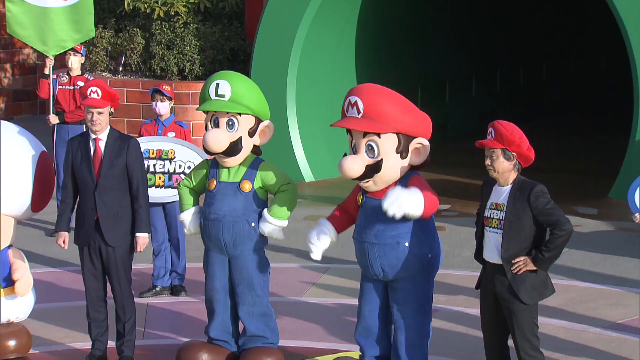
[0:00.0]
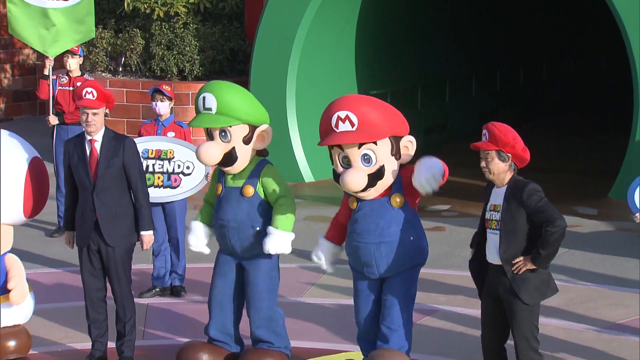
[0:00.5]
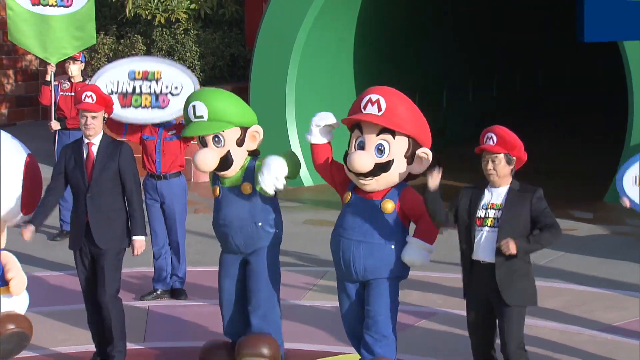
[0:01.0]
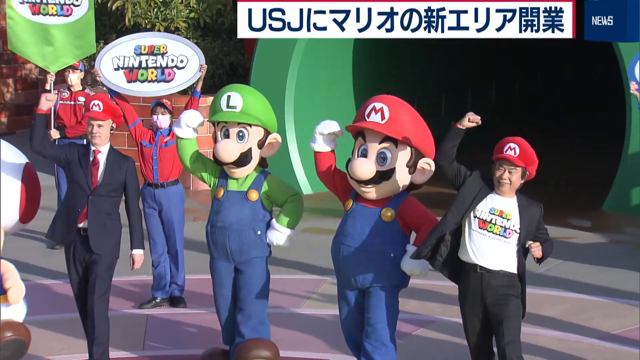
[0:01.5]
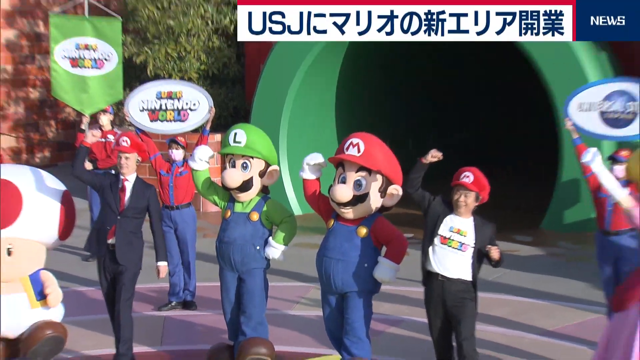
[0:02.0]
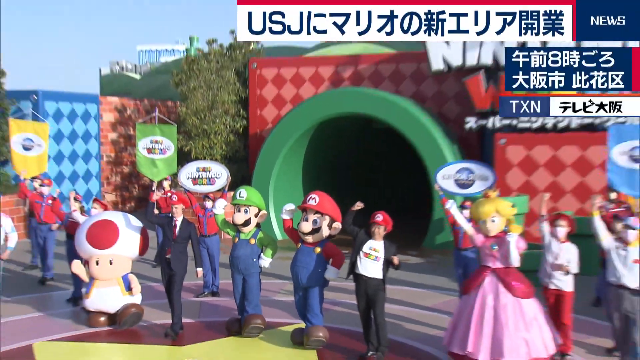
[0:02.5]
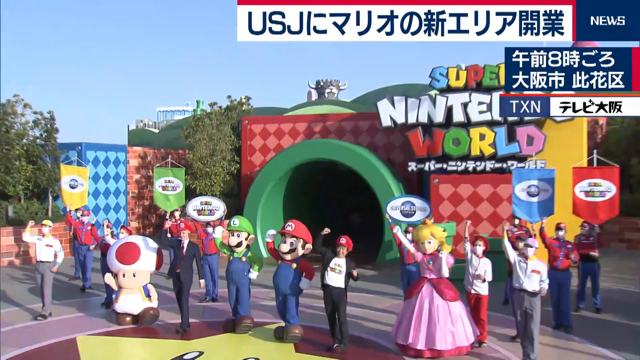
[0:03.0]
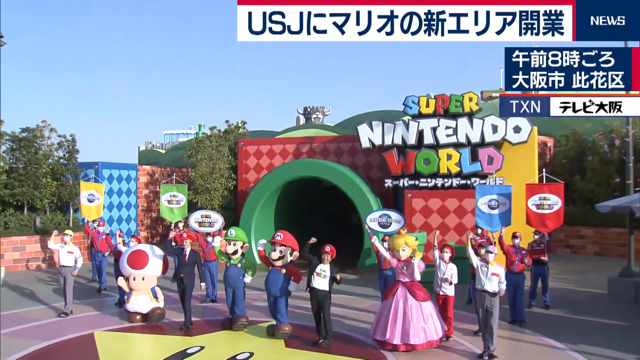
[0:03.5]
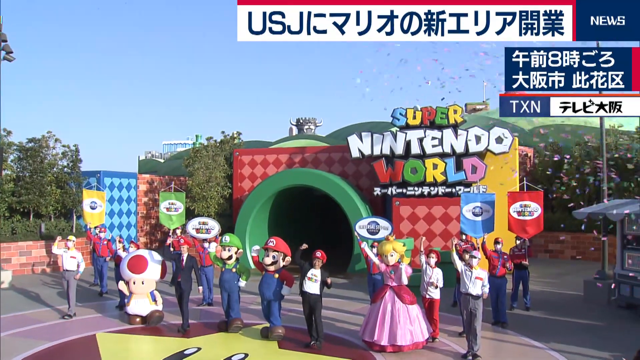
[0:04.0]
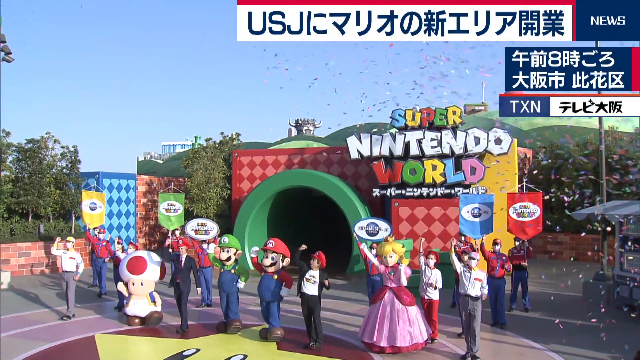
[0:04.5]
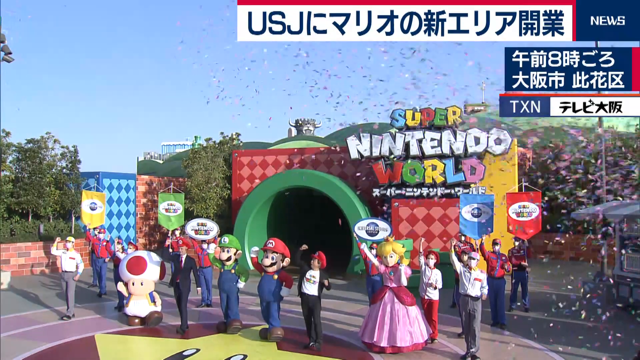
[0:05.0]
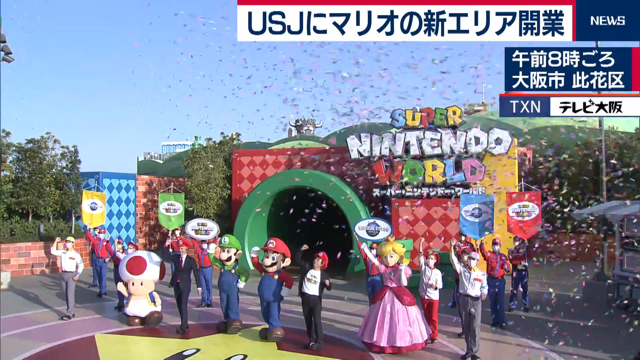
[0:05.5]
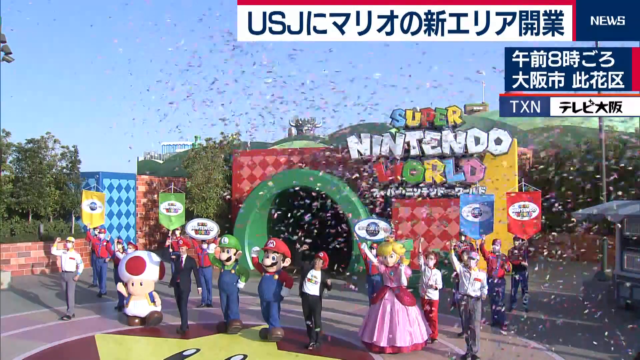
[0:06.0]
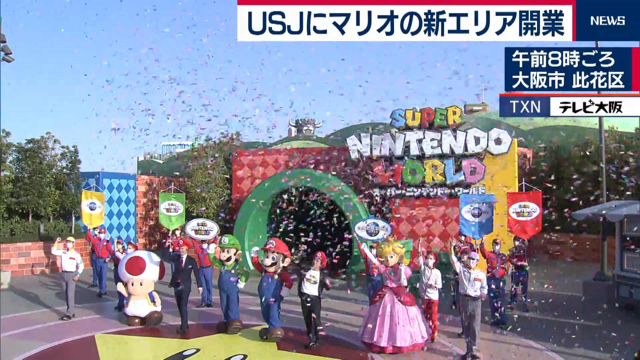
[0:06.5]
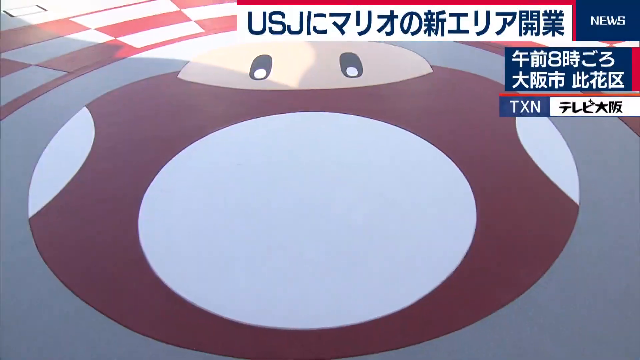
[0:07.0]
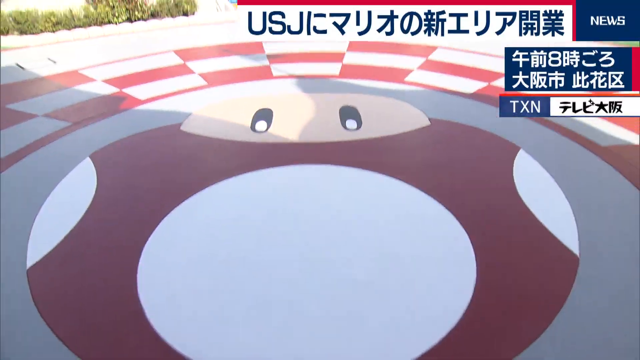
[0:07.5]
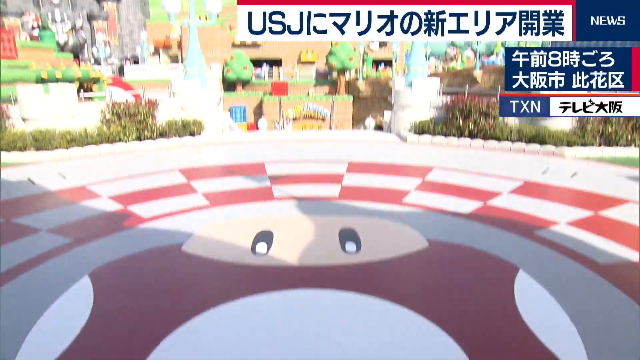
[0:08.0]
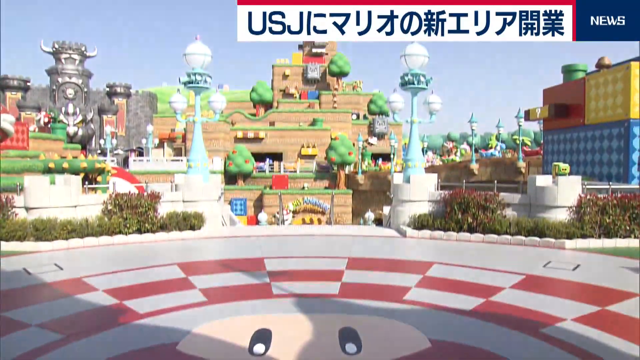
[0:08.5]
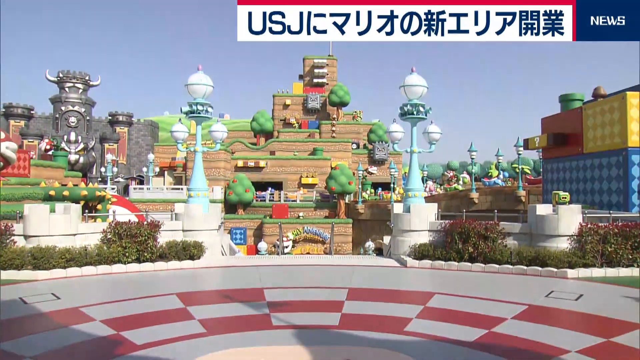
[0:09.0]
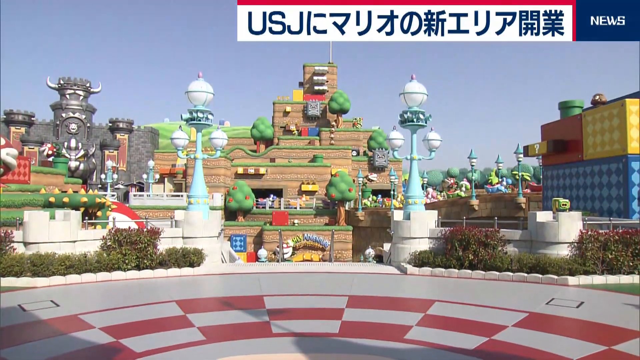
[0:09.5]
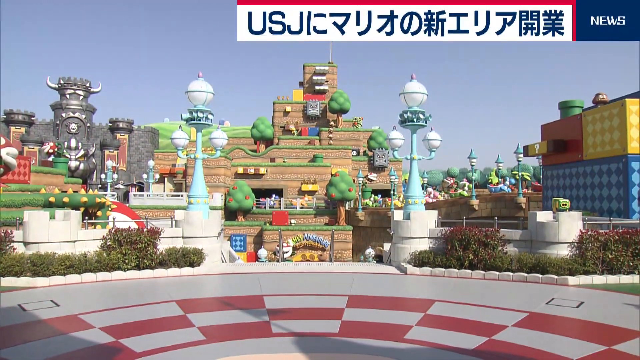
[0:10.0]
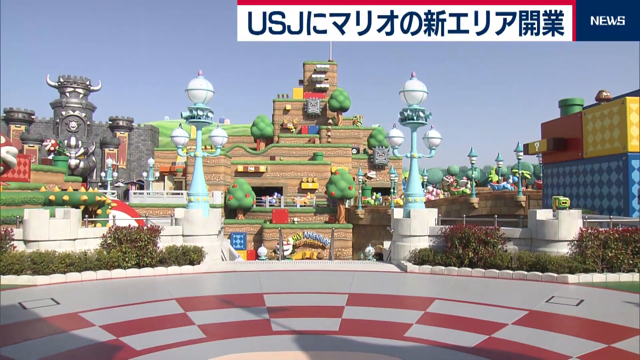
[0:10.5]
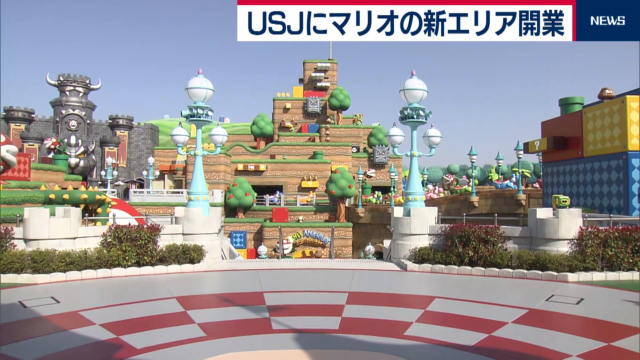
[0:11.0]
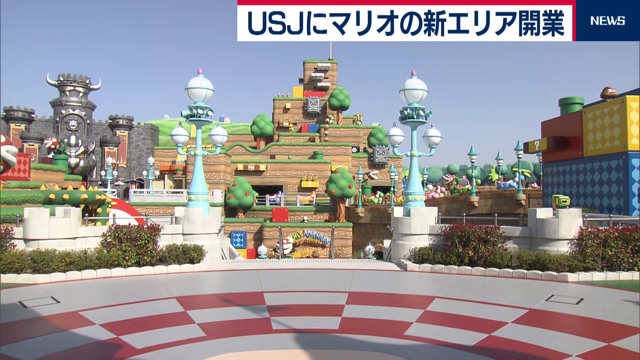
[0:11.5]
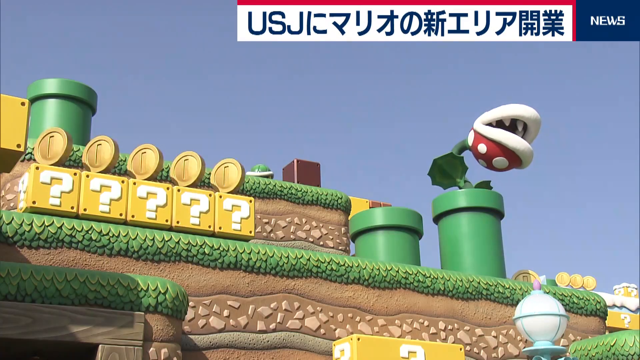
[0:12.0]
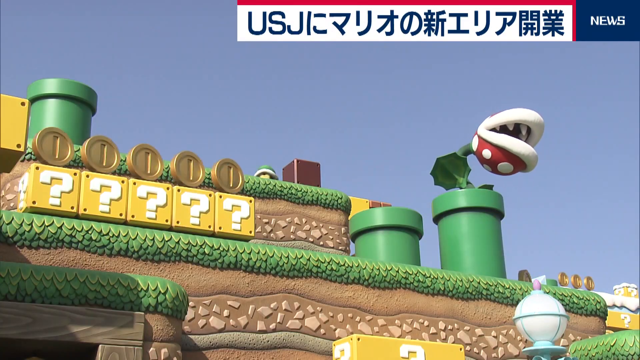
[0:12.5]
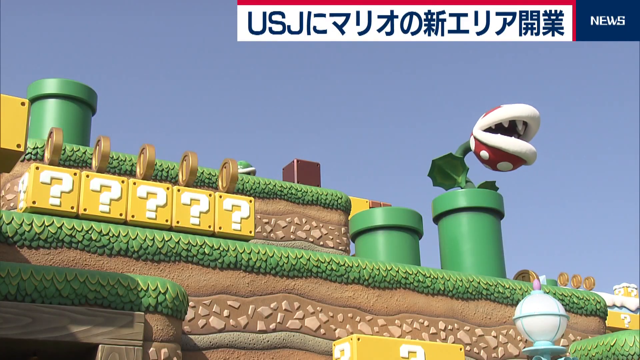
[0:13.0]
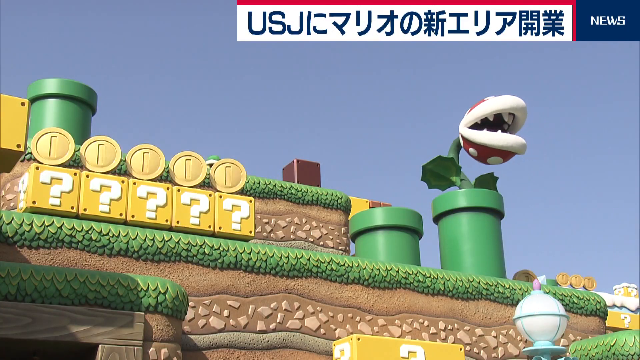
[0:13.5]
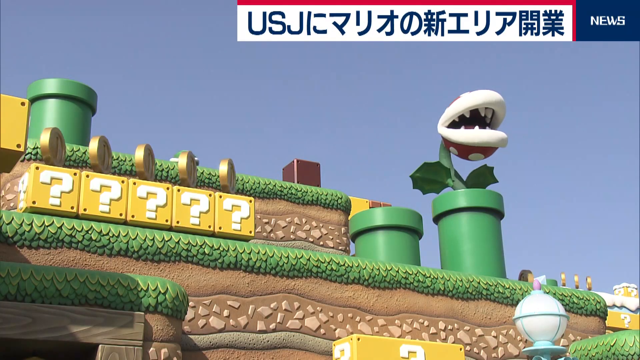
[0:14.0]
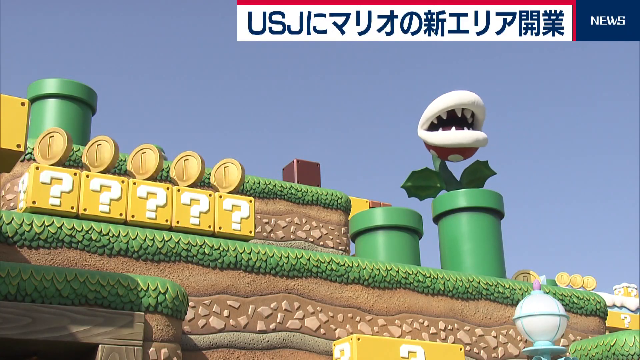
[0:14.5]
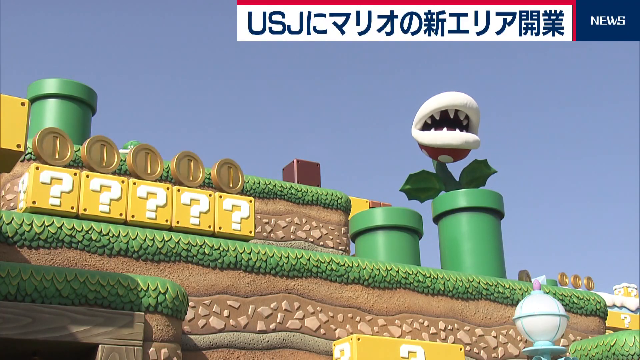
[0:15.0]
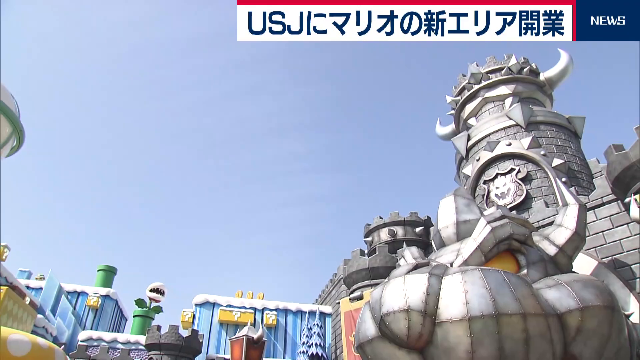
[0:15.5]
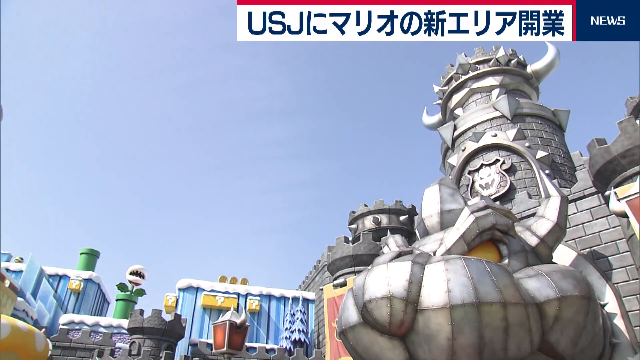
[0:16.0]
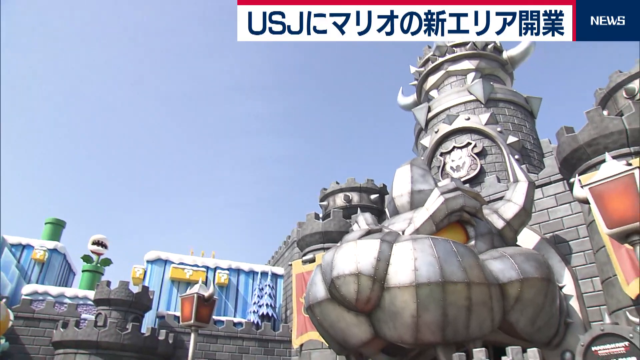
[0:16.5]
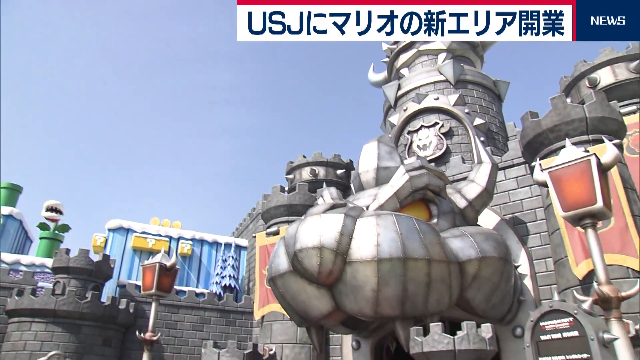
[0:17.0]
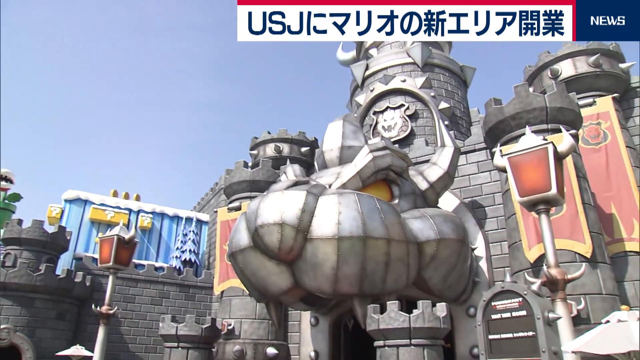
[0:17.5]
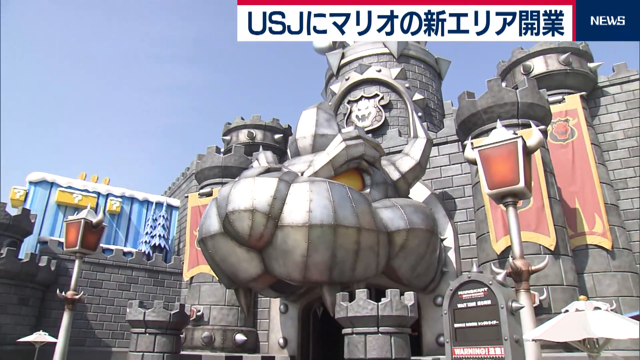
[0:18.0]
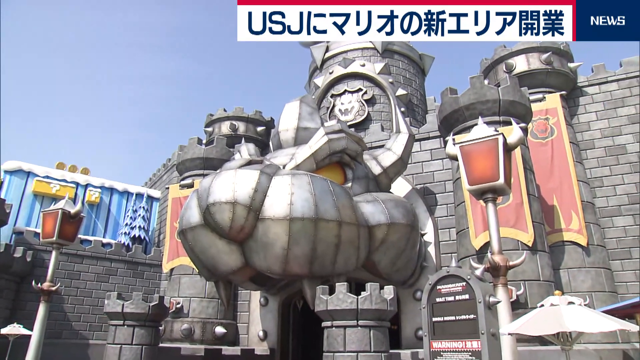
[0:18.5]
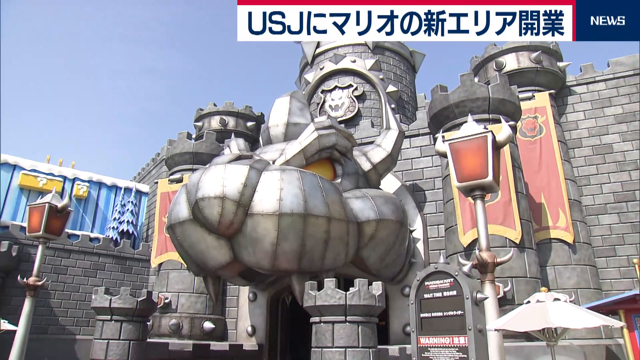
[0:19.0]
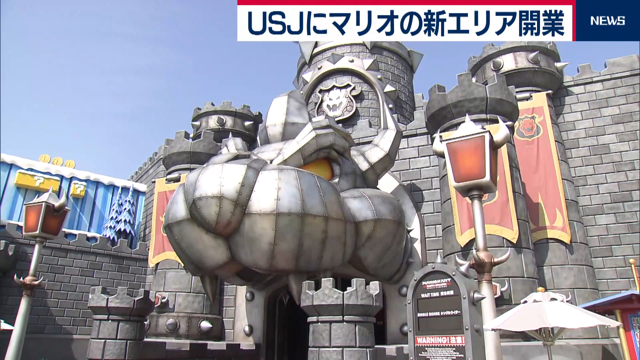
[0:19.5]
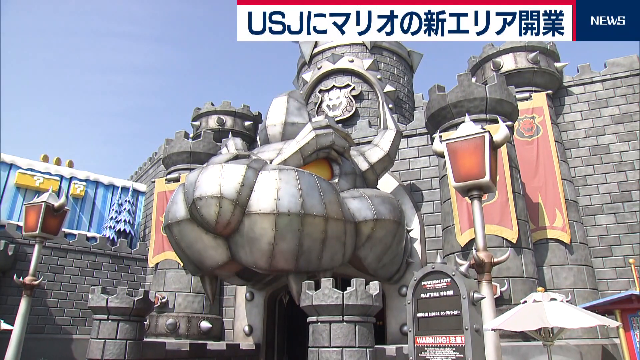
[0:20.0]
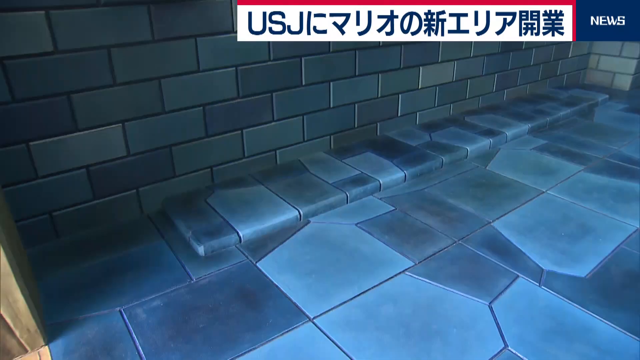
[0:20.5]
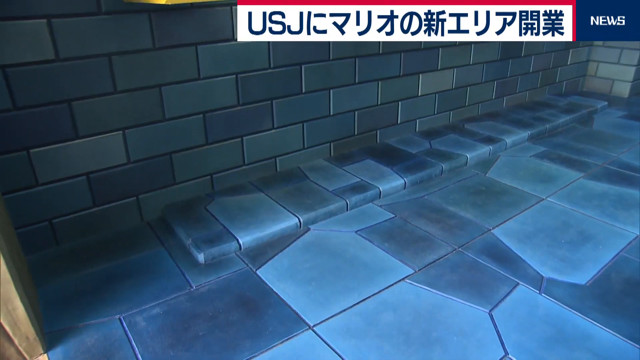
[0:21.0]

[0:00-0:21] Some kind of event takes place at Super Nintendo World in Japan. People dressed as Mario, Luigi and Princess Peach appear alongside normally dressed people, all cheering and excited, and everybody is wearing Mario and Luigi hats. Someone is dressed as Toad, a little mushroom character. Behind them is what seems to be the entrance to the amusement park, with a sign that says "Super Nintendo World" and Japanese letters beneath it. The video cuts to a look inside the park, showing an open pavilion that is white, circular and marble-looking. It then cuts to one of the pipes from Super Mario with a piranha plant in it, apparently an animatronic piranha plant, and coins are spinning on top of question mark boxes. The interior of a building is shown, and it all looks just like it is from the Super Mario video games.